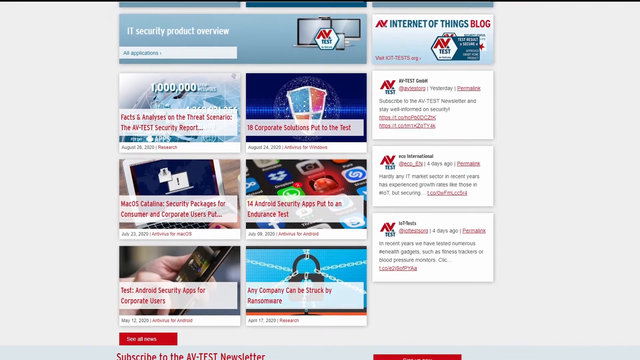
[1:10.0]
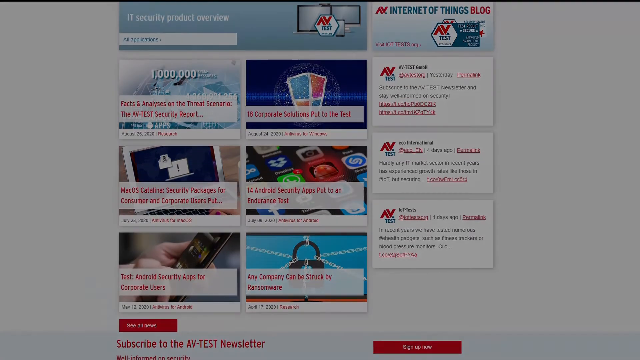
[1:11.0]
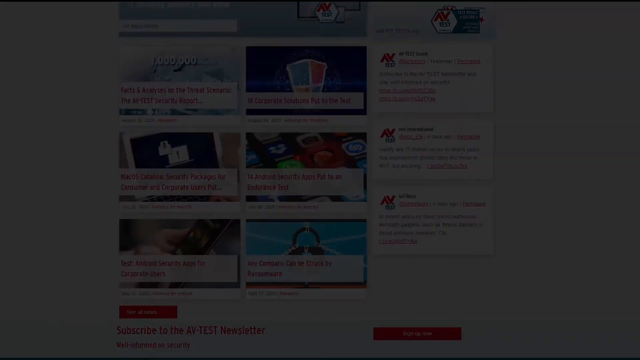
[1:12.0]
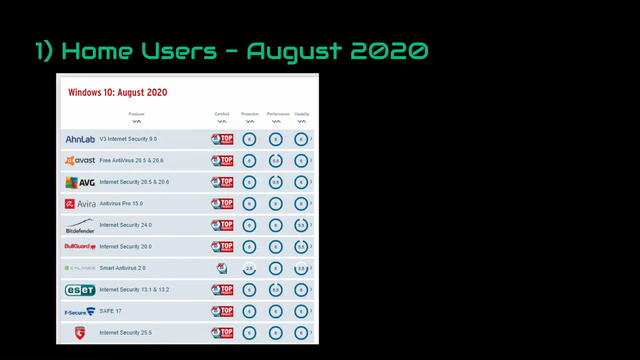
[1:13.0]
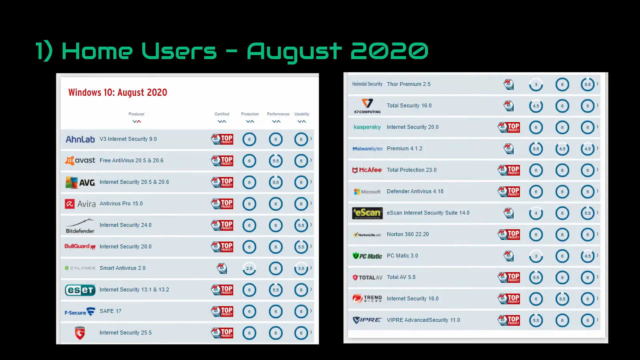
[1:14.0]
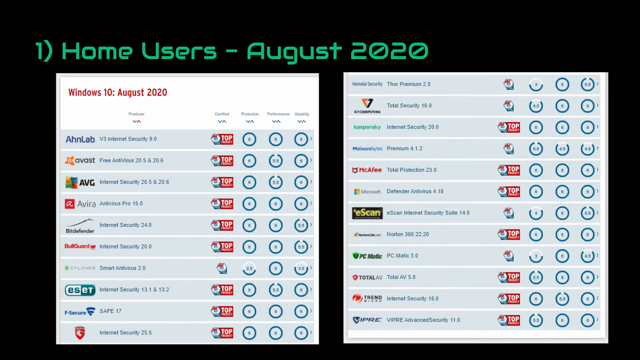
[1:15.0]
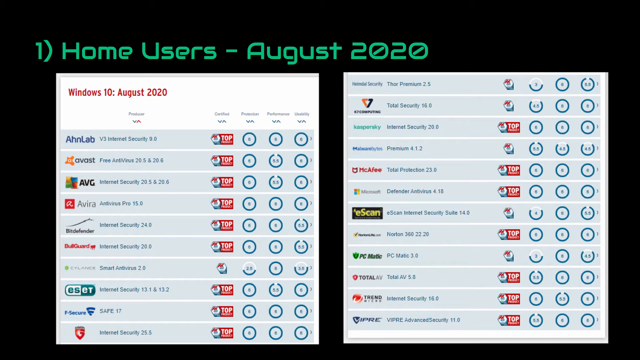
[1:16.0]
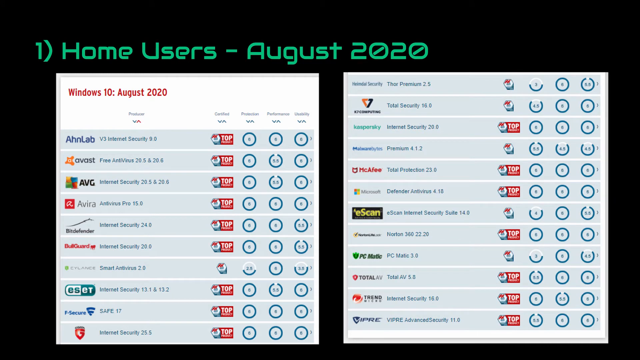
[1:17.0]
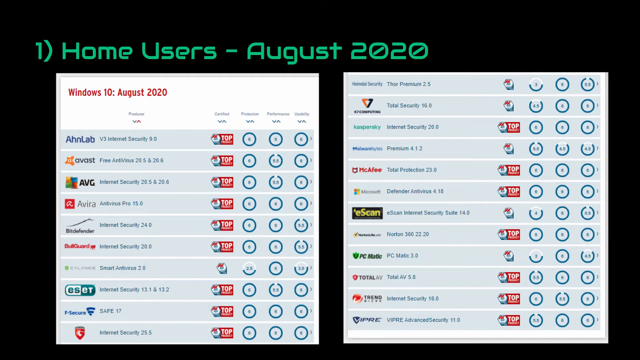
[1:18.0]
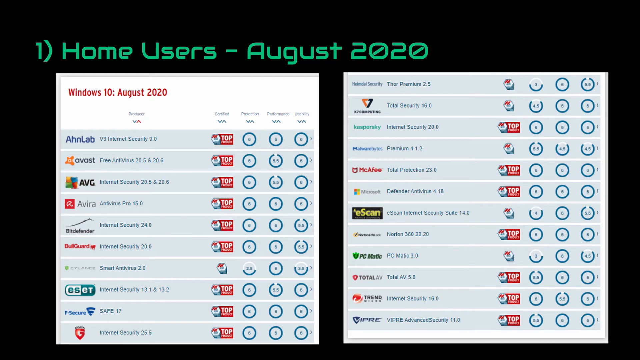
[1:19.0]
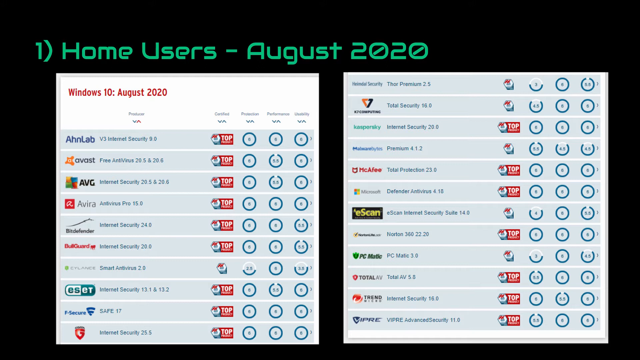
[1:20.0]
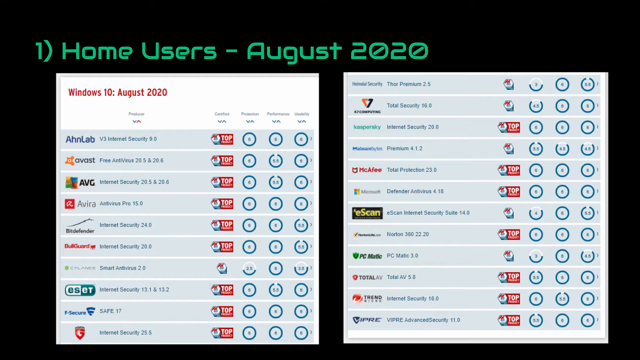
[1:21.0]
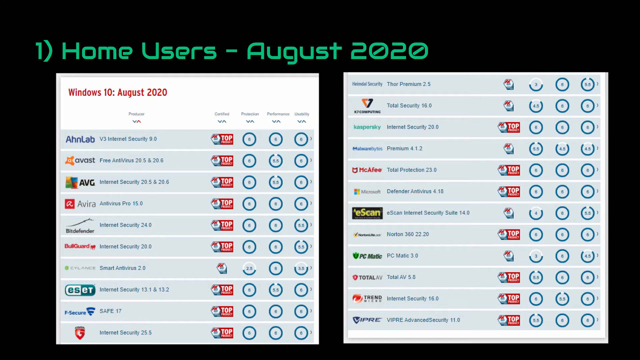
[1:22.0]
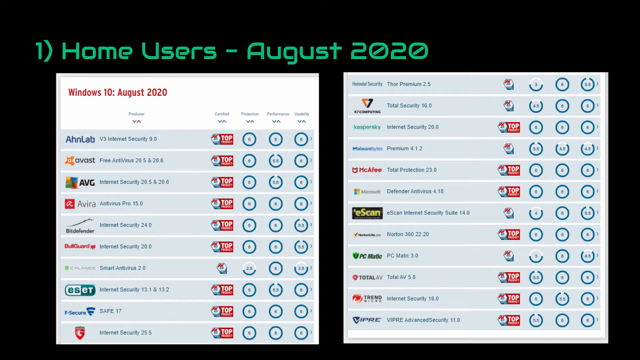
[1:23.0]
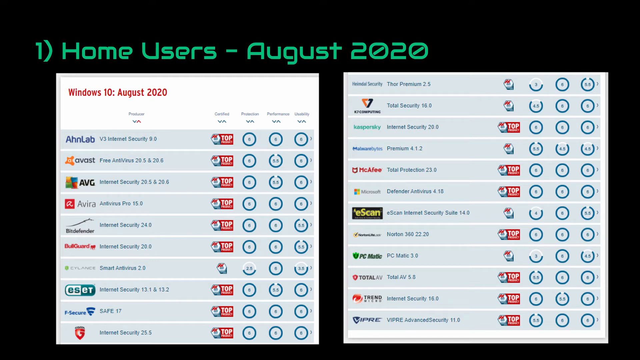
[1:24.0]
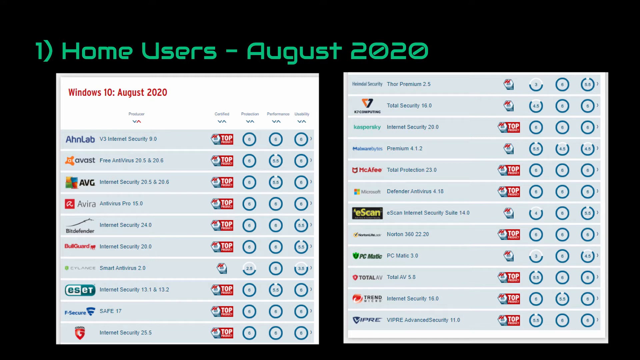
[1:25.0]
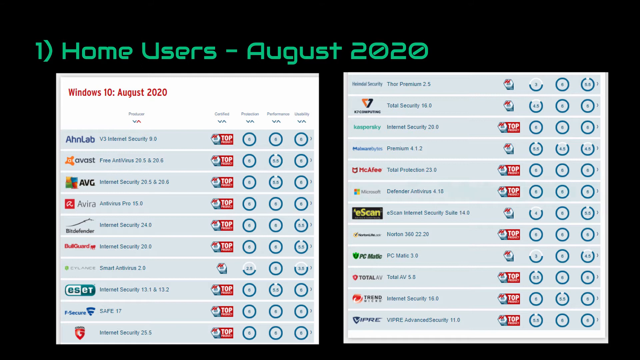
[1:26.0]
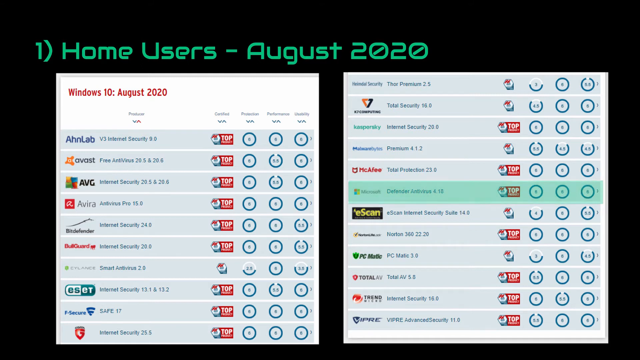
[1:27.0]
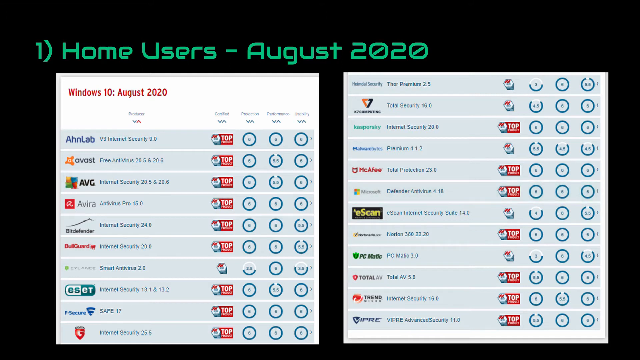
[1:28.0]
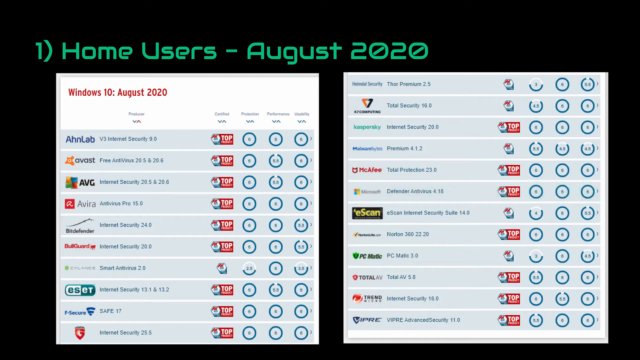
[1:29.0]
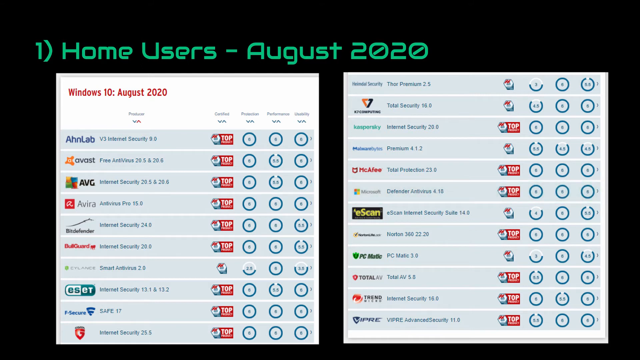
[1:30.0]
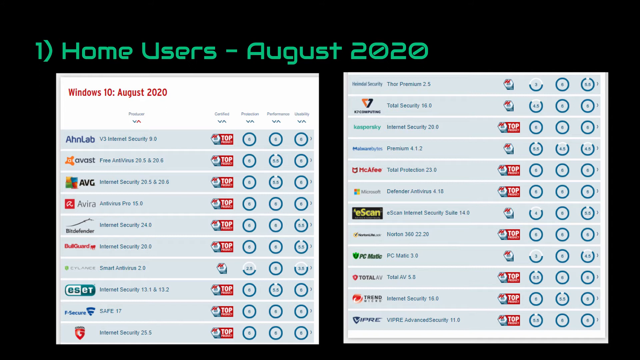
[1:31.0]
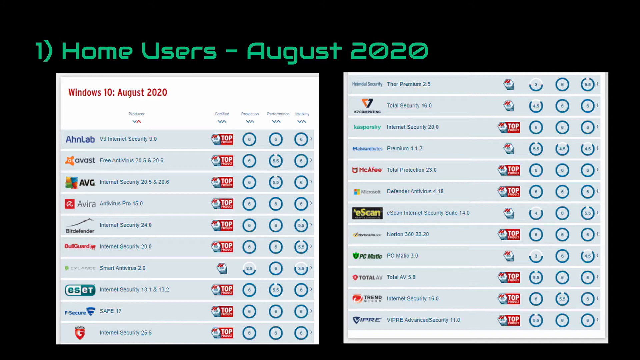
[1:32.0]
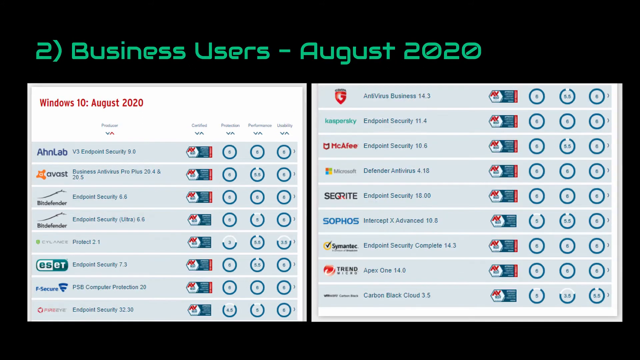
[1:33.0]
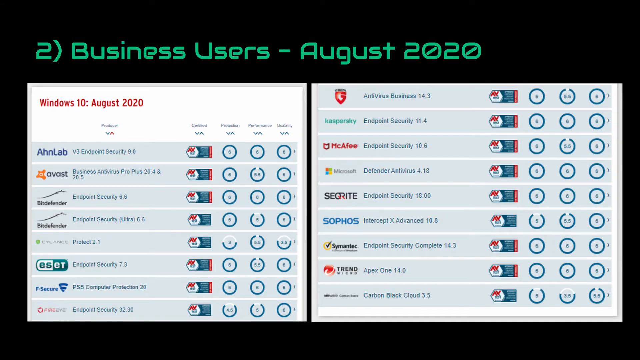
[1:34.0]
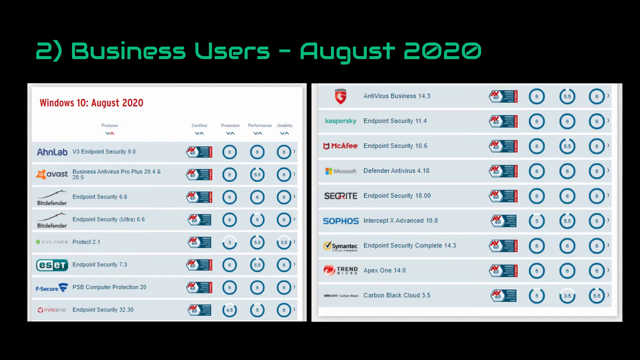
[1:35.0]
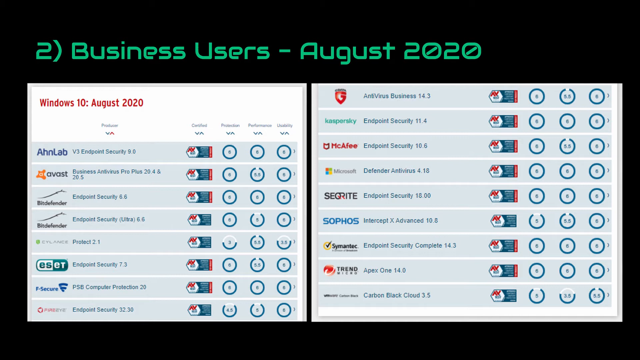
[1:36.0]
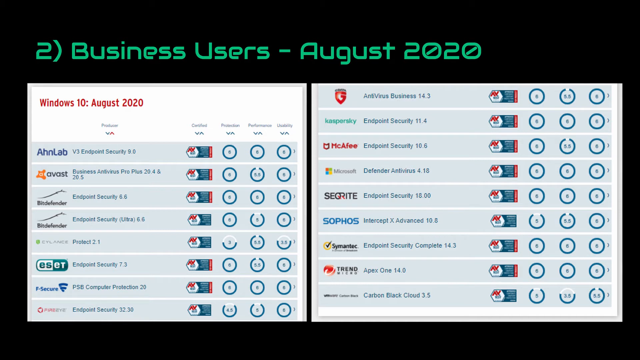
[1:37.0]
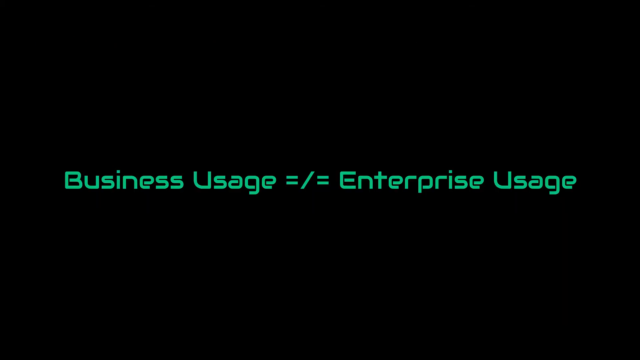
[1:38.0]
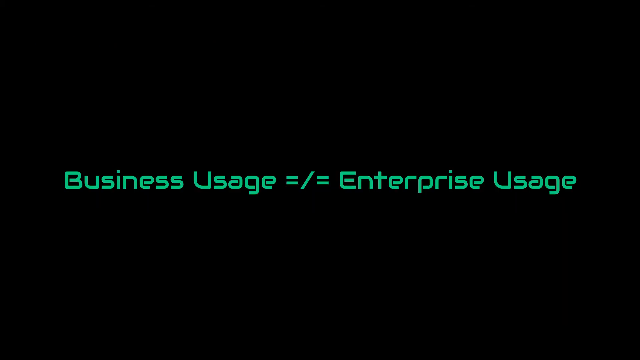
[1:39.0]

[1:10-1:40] The screen fades to dark until it is completely dark, then a new page appears reading "one, Home Users, August 2020" and "Windows 10, August 2020". One item reads "On Lab". A list follows of names such as Avast, ABG, Avera and Bitdefender, some of them hard to read, which appear to be different computer security programs, along with what looks like ratings, possibly comparing what they do and don't do. More names include McAfee, Microsoft Defender Antivirus, eScan and PCmatic. Microsoft Defender Antivirus looks highlighted in green. The view zooms in a little.